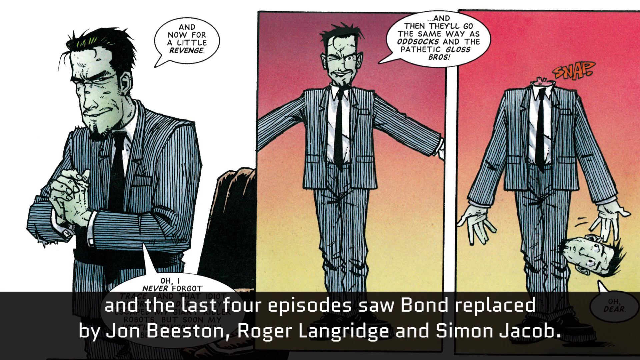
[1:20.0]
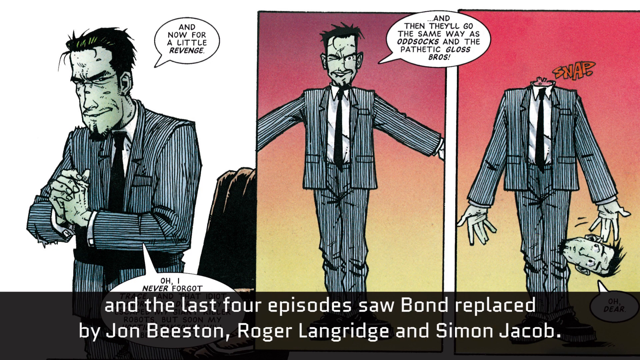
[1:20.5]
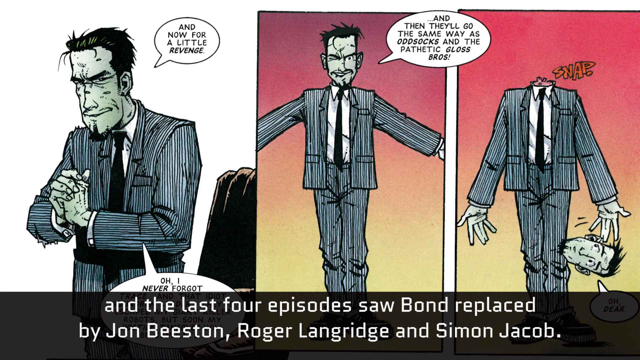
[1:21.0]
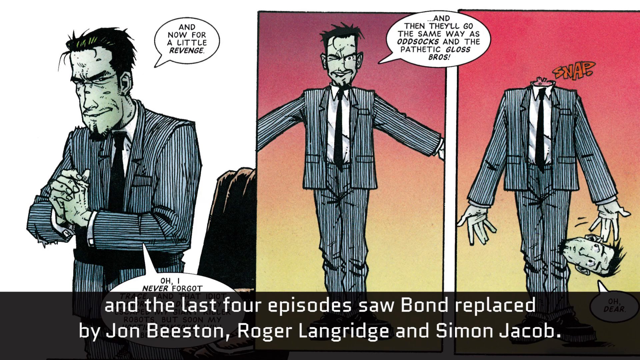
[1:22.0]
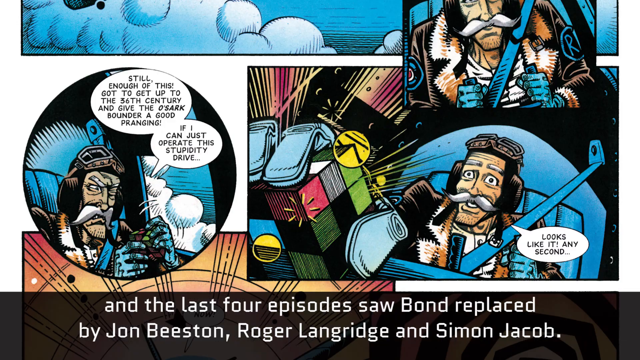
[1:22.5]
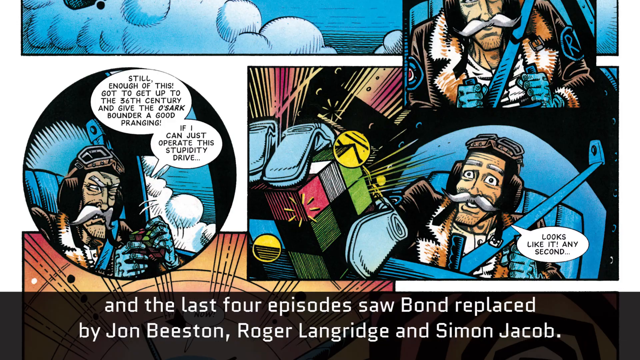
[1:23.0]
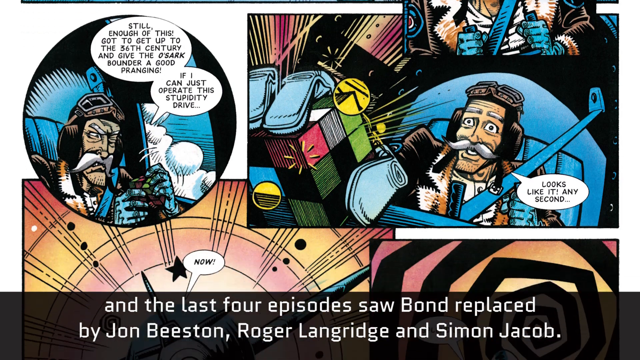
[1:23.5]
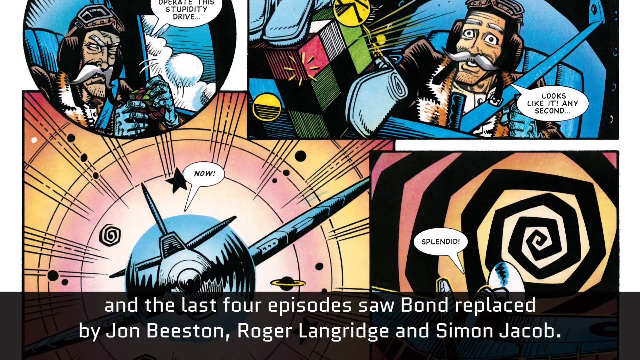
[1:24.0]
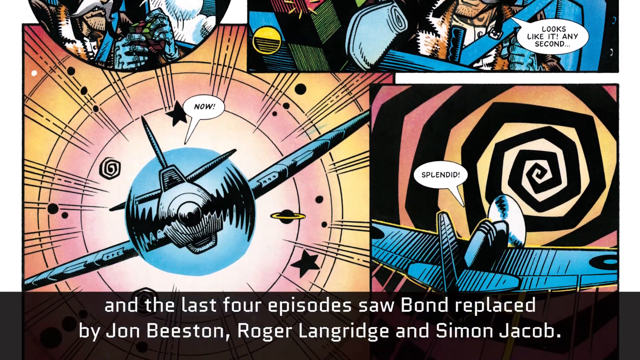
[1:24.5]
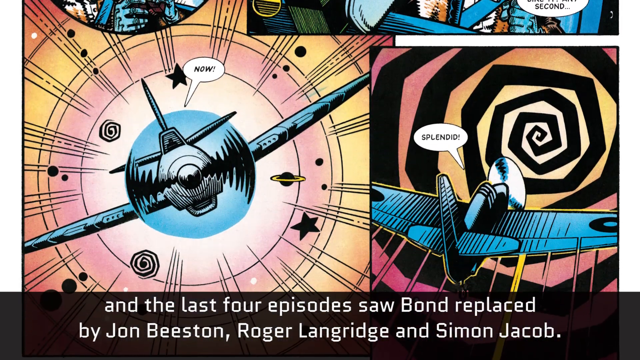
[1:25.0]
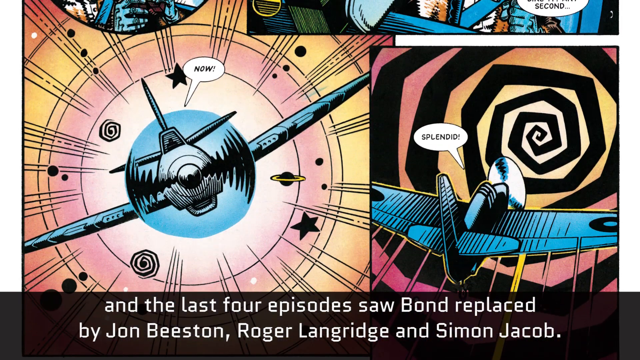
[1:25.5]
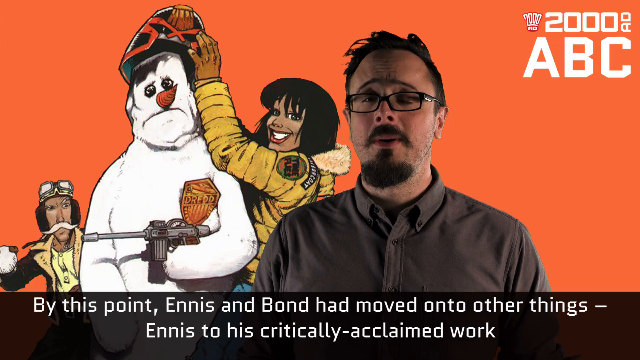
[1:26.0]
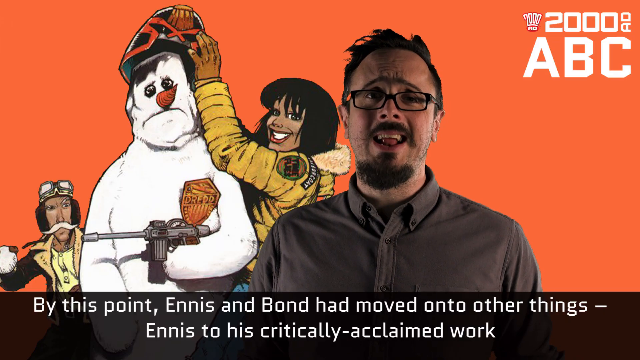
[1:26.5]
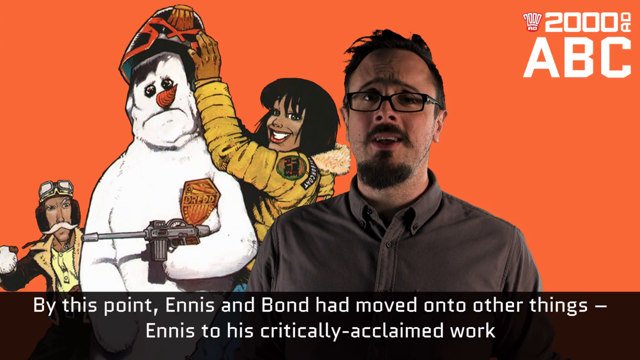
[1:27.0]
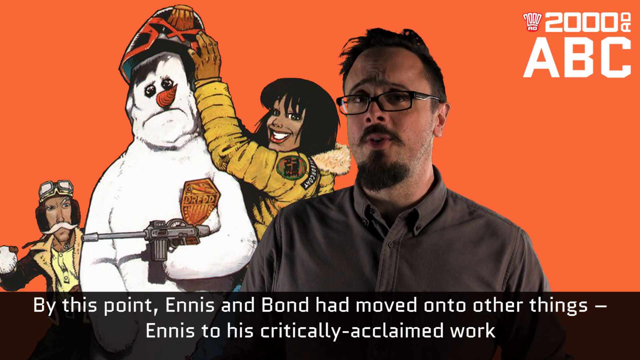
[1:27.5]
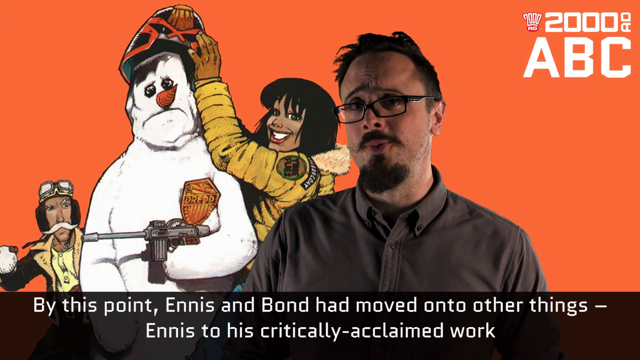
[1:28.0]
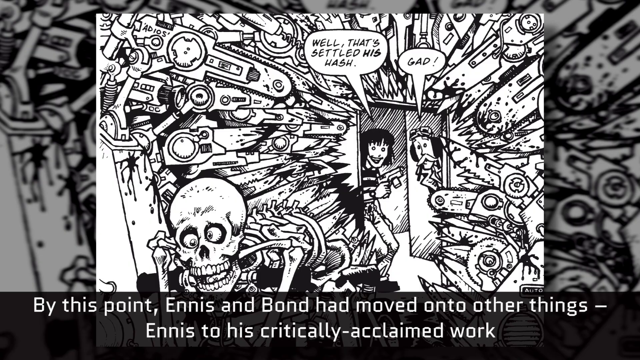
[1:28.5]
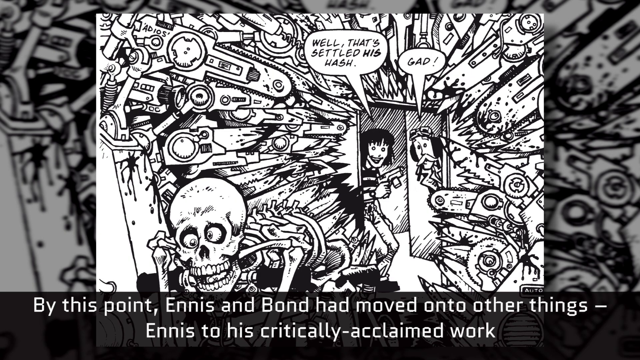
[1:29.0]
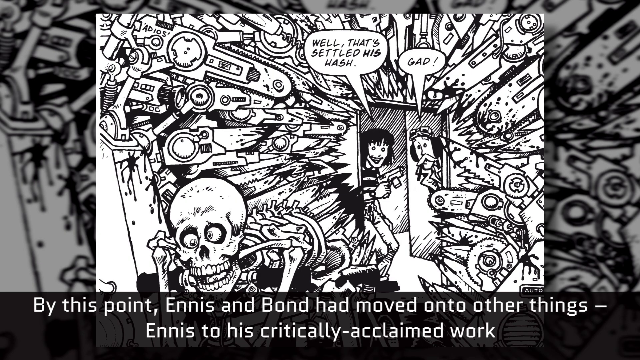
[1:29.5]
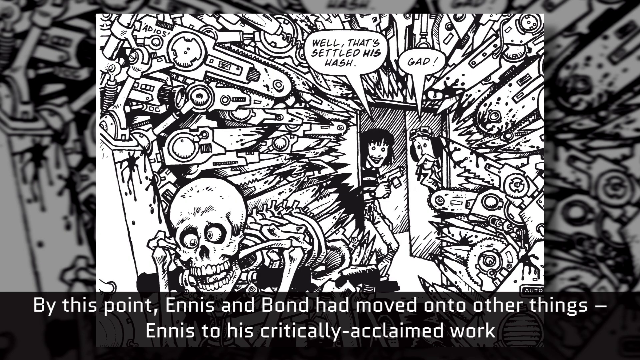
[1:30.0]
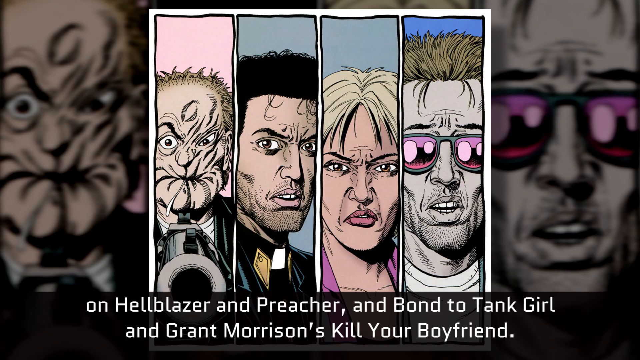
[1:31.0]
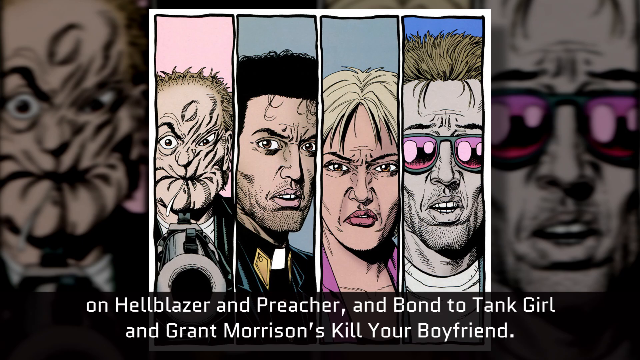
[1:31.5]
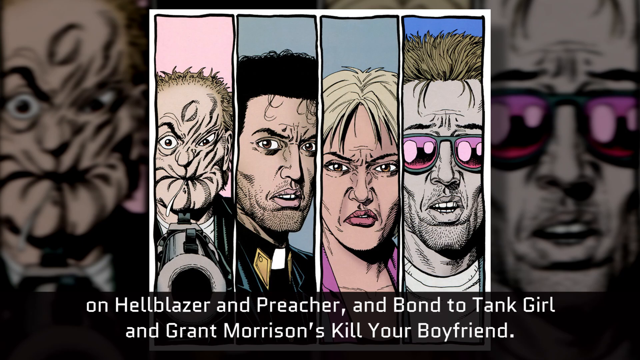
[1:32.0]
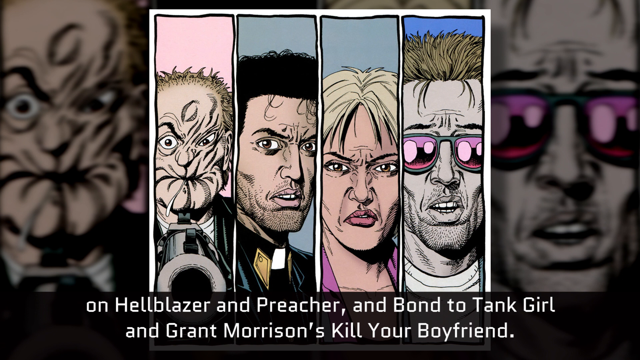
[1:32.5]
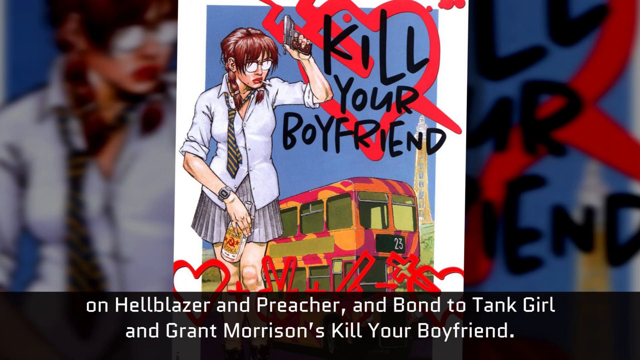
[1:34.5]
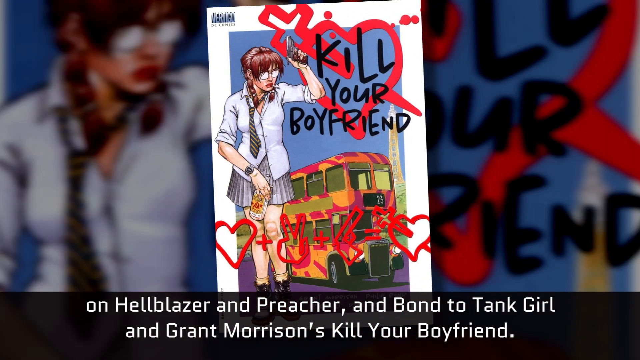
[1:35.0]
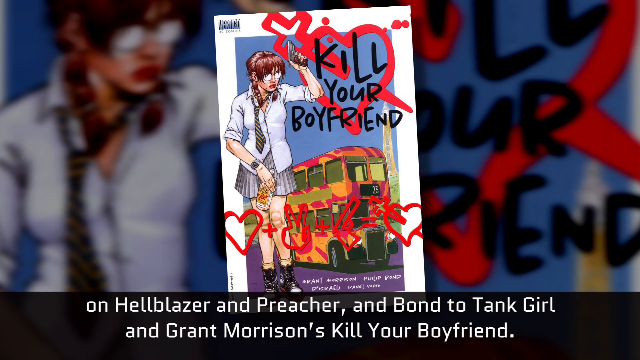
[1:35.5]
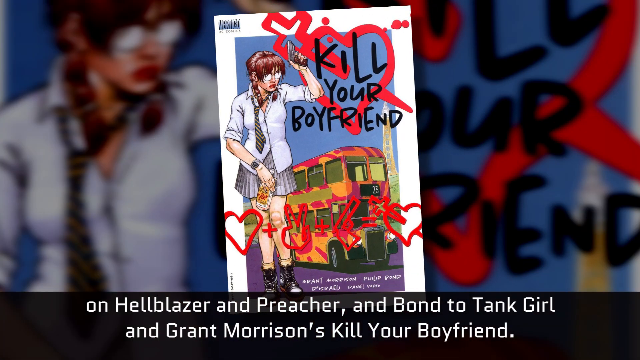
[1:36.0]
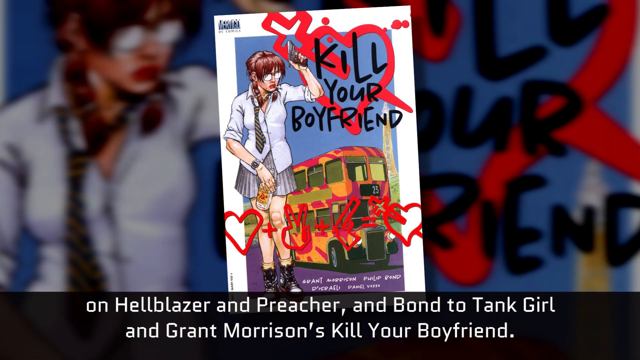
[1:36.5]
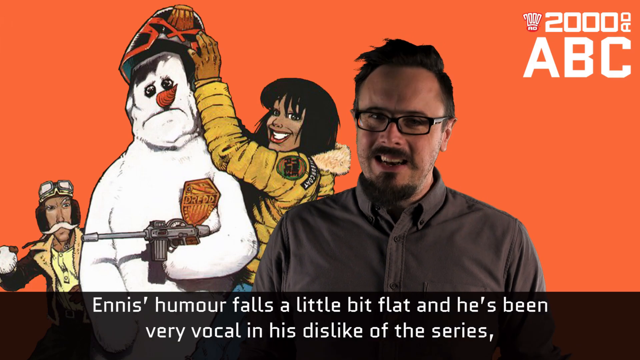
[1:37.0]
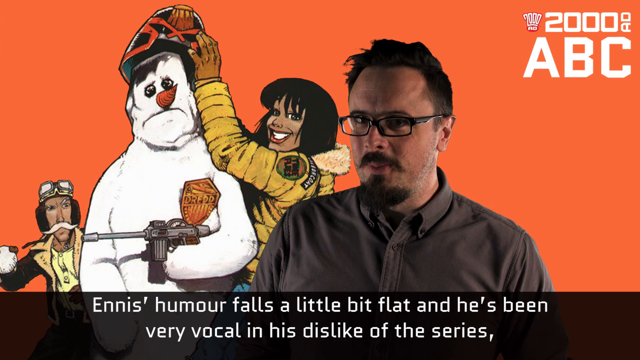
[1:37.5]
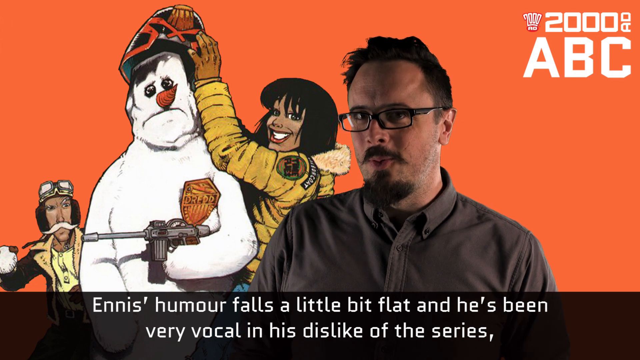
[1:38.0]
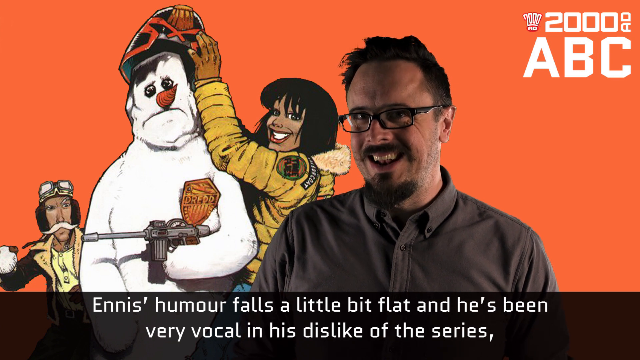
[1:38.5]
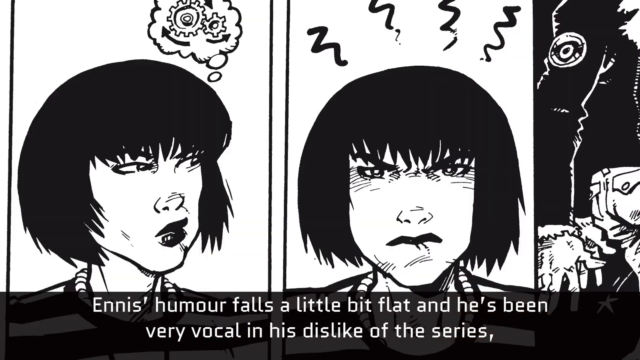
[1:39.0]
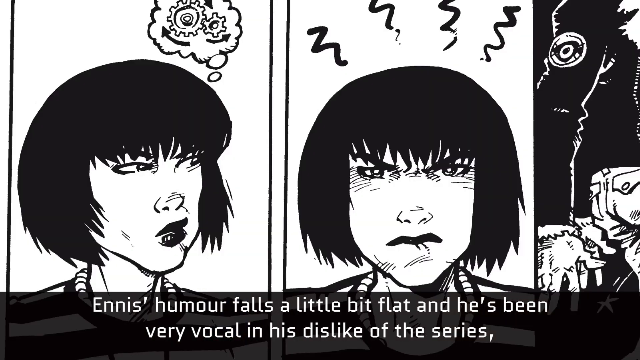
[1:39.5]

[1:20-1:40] Another comic is shown, with writing at the bottom that says "And the last four episodes saw Bond replaced by John Beeston, Roger Langridge and Simon Jacob". In the comic strip the pilot says "Still enough of this, gotta get up to the 36th century and give the Ozark bounder a good pranging. If I can just operate this stupidy drive". The view pans down the comic to the plane flying as if it is coming out of the comic, then the back of the plane, which seems to be heading into a warp zone. The video cuts to the man in the studio with the orange background, with words at the bottom saying "by this point Ennis and Bond had moved on to other things". It cuts to another comic showing a skeleton in a room full of many different types of weapons, several sharp: razor blades, knives, guns and bombs, hundreds of them. The pilot and the girl are at the doorway; the girl says "well that's settled his hash" and the pilot says "gold". The video cuts to the comic Preacher, with text at the bottom mentioning "Hellblazer and Preacher". On the left side is Arseface from Preacher, then Preacher, then a woman with blonde hair, and then probably Cassidy from Preacher. Then the front of a comic called Kill Your Boyfriend appears, with a double decker bus and a schoolgirl holding a bottle next to it. The video cuts back to the man with the orange background and then to a black and white comic, with text at the bottom saying "Ennis's humour falls a little bit flat and he's been very vocal on the dislike of the". The black and white comic depicts a girl with very short bobbed hair who is thinking and then getting annoyed.